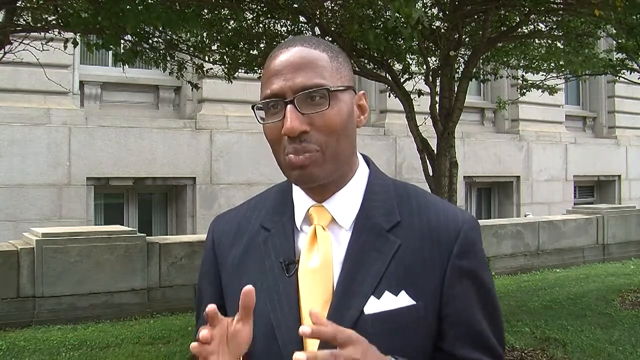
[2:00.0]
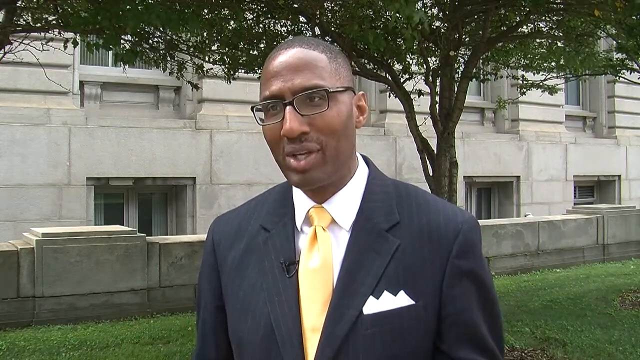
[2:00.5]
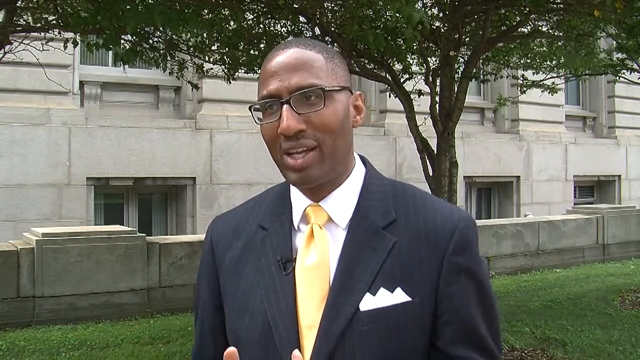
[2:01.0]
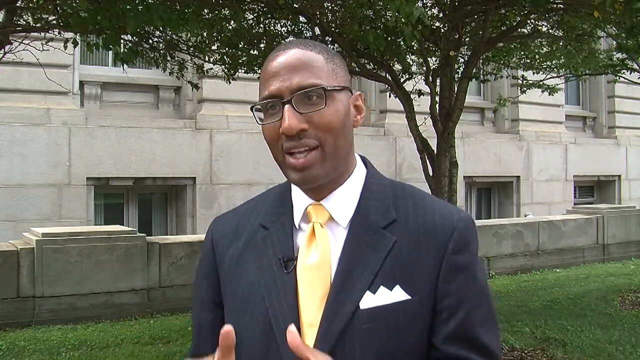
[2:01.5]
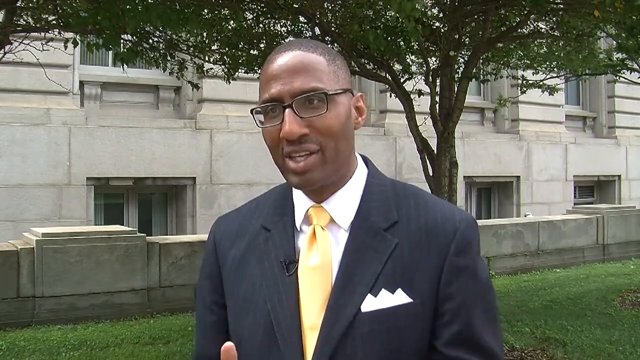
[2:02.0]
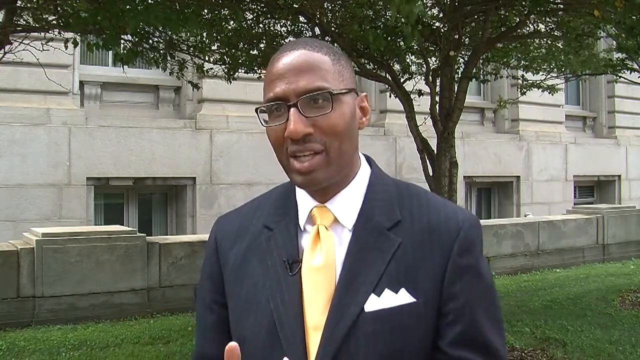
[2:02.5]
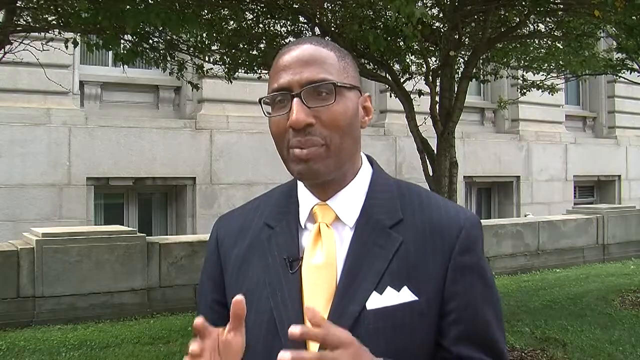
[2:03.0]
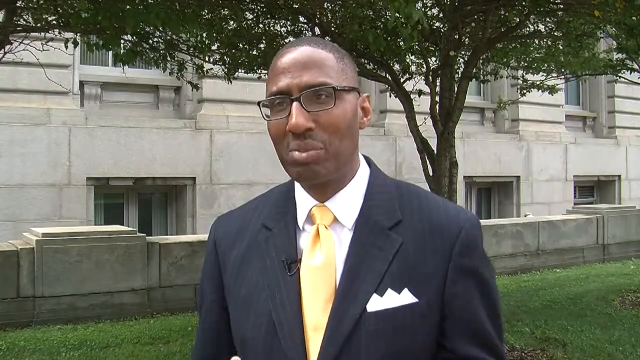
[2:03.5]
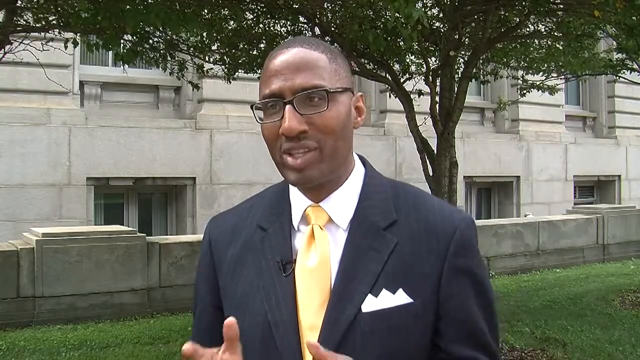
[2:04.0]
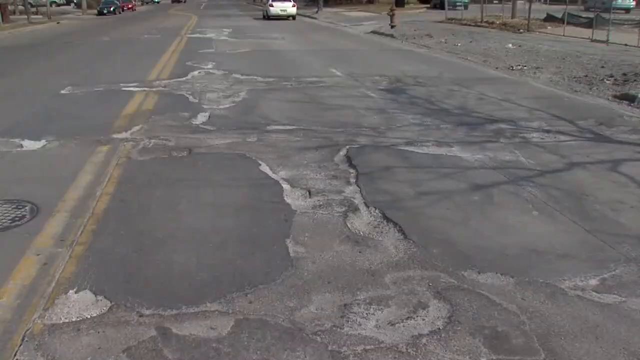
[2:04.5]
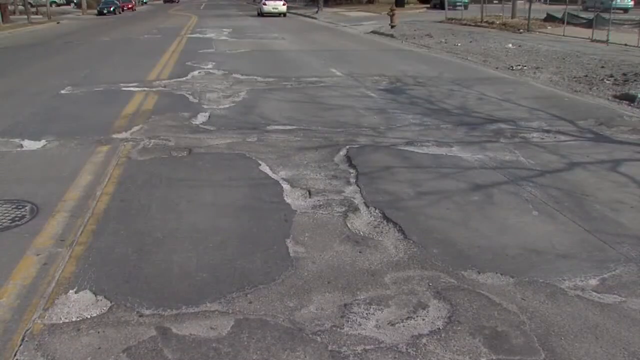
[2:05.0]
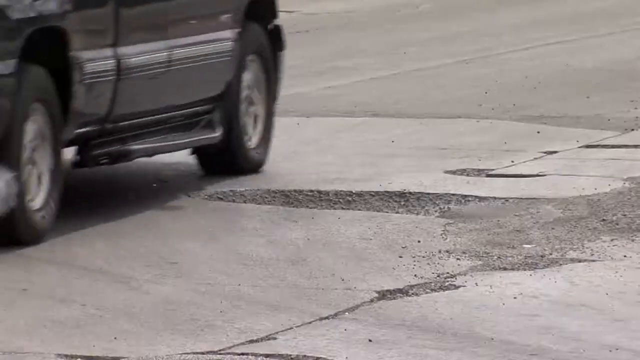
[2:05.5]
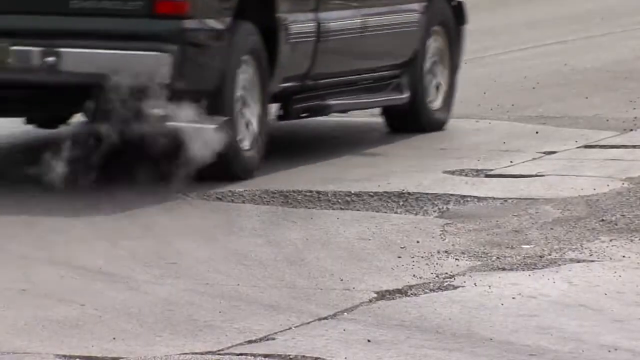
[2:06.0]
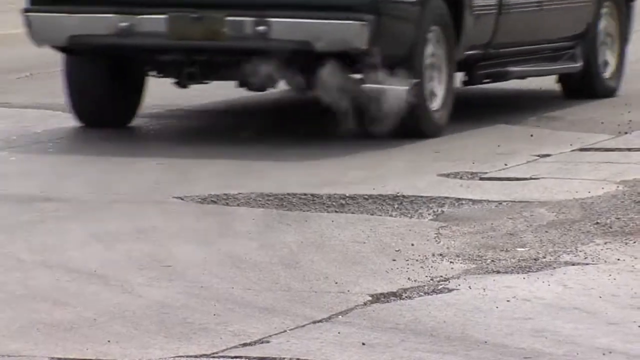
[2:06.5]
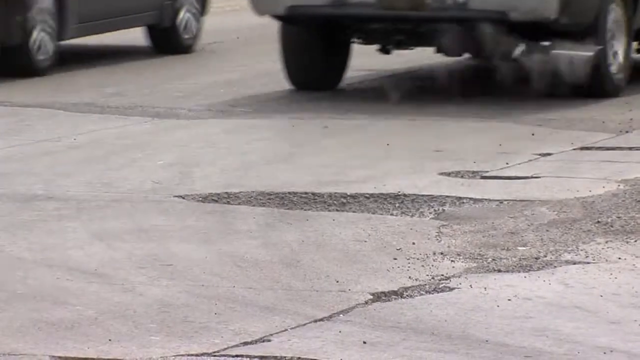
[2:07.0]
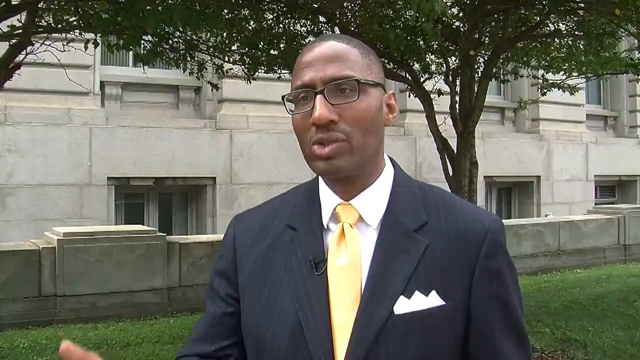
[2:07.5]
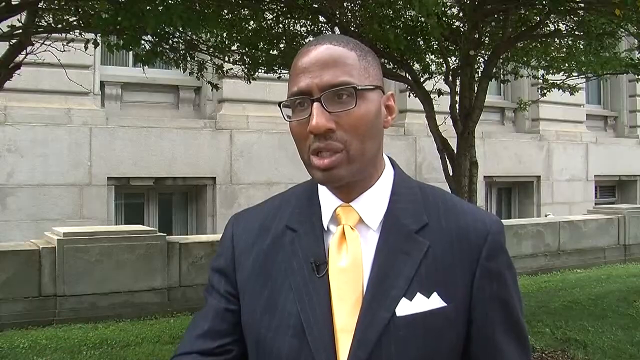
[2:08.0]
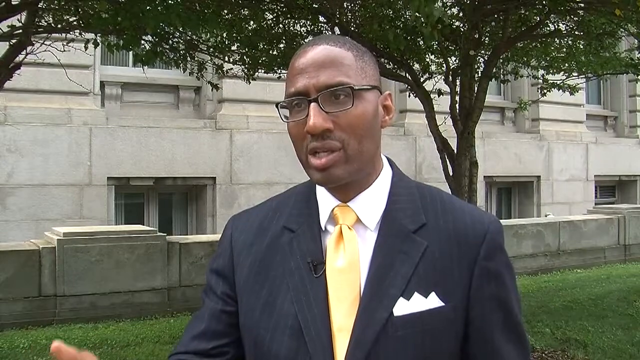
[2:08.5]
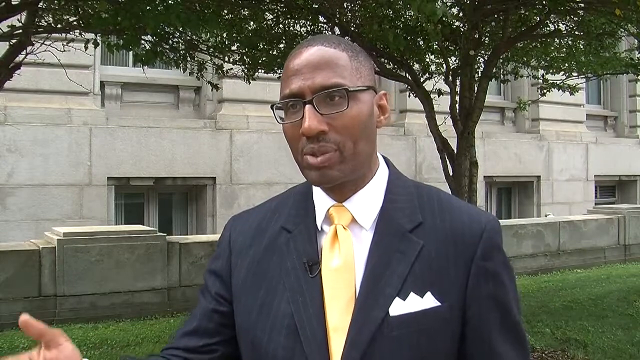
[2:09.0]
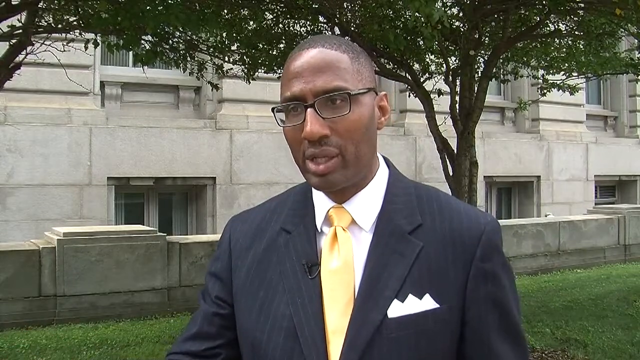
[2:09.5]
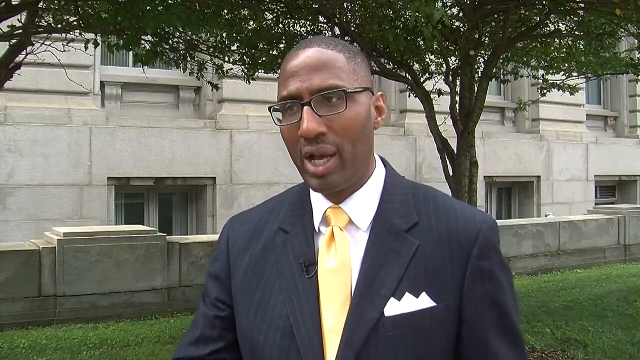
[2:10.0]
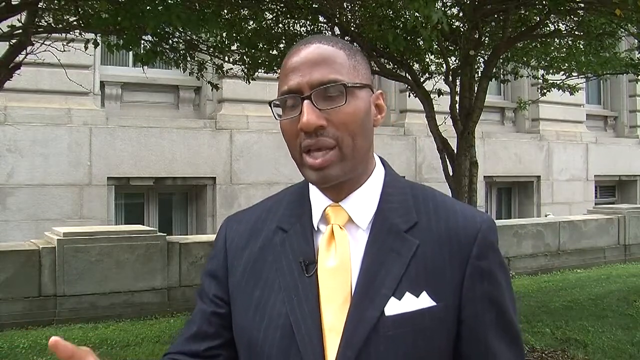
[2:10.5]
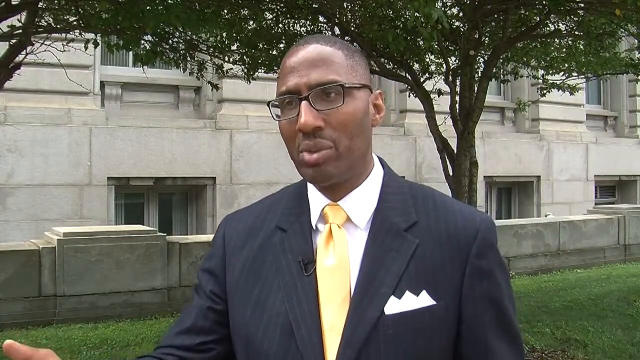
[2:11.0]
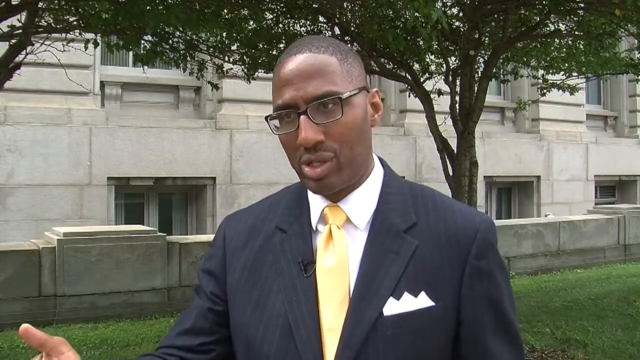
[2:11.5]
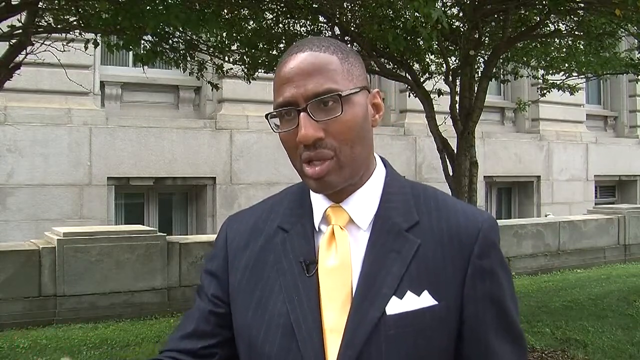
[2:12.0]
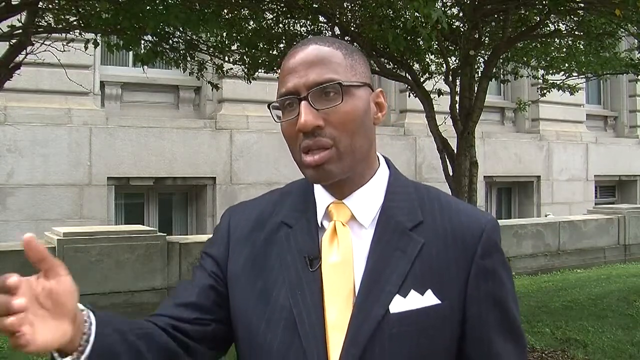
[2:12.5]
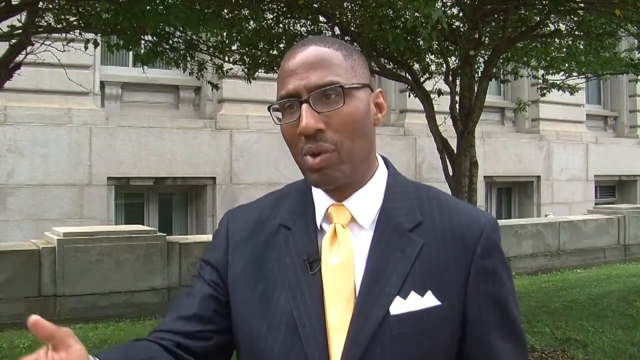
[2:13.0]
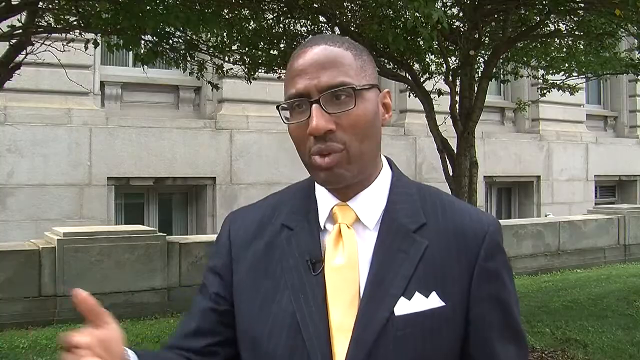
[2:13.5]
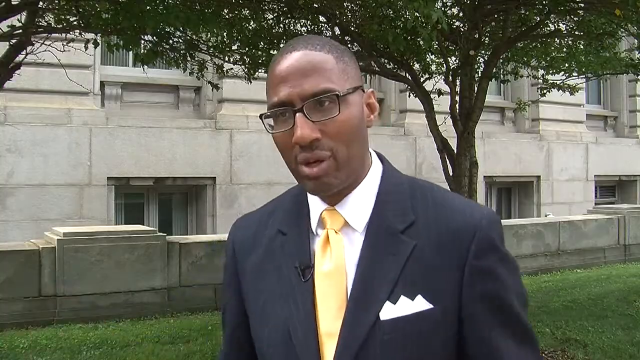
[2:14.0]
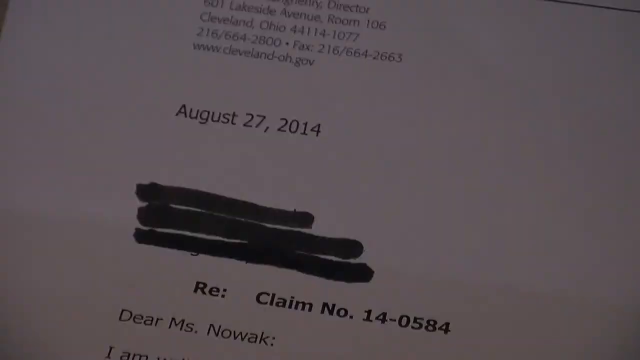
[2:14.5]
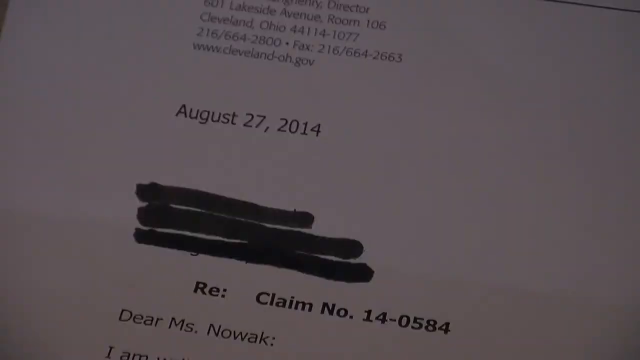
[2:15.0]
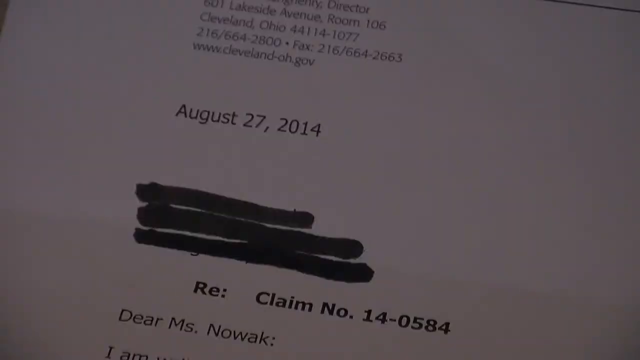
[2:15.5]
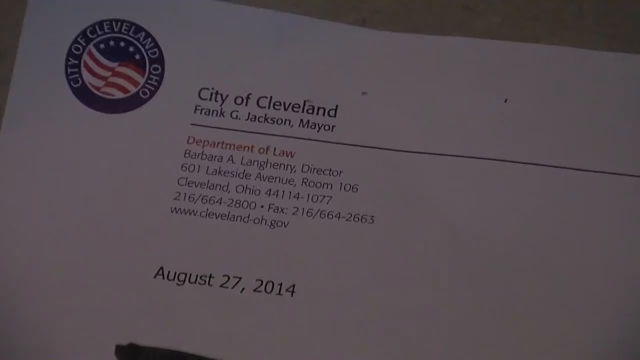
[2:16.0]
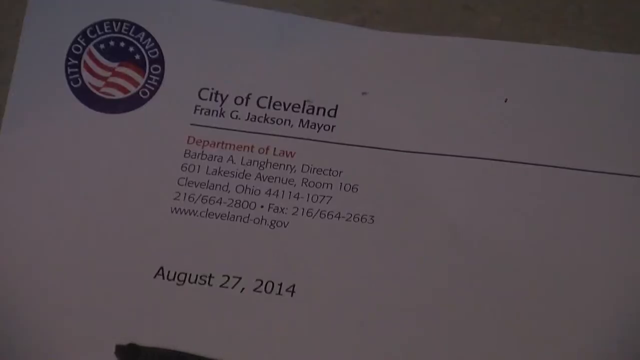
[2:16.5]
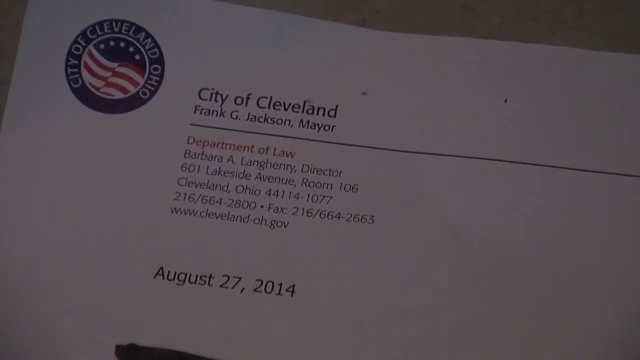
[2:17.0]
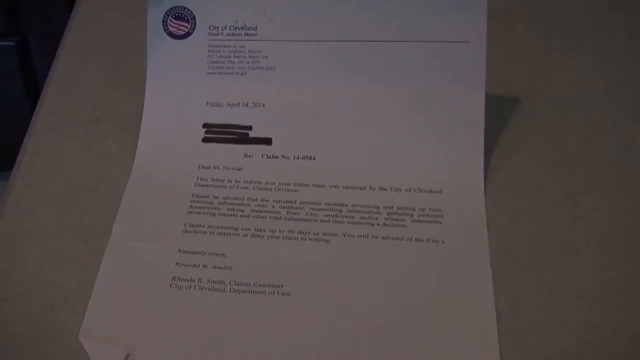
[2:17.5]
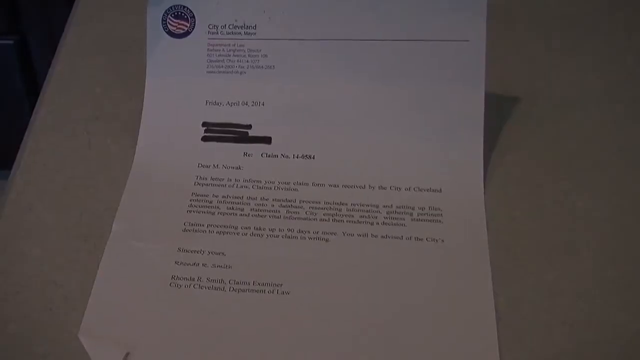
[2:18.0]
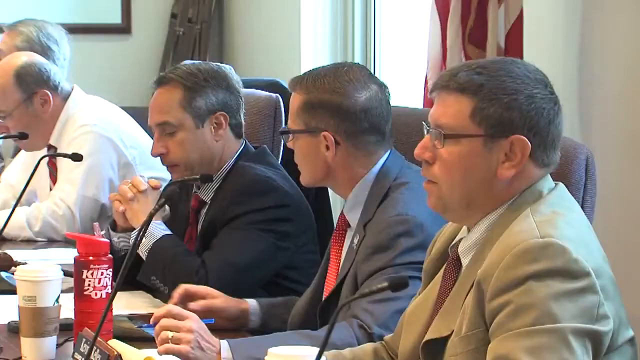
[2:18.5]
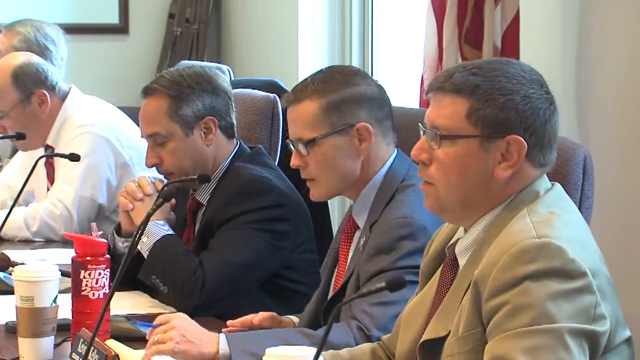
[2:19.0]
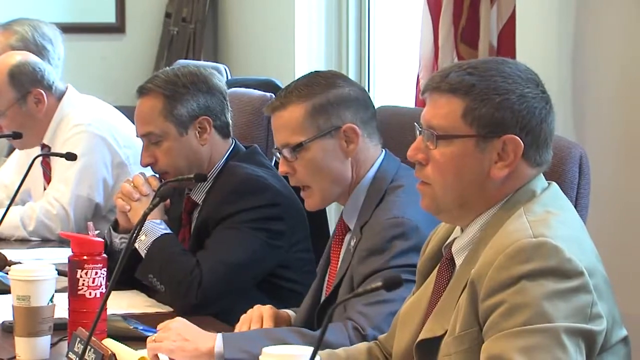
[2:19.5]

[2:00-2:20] A man in a black suit, white shirt, yellow tie and glasses speaks to another person in the frame, with an office structure, a tree and grass in the background. Footage of the poor road follows, showing potholes, parked vehicles and a vehicle passing by. The video returns to the man speaking to the interviewer. A claim form appears, dated August 27, 2014, from the city of Cleveland, with Frank G. Jackson the mayor and the department of law, along with what appears to be the claim number, then shown in detail. The scene moves to people in suits in an office, with a microphone and drinks on the table. All but one wear glasses, and all wear suits and coats except one man, whose white shirt is visible.